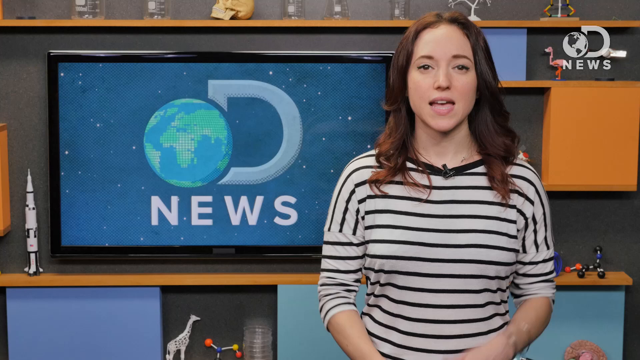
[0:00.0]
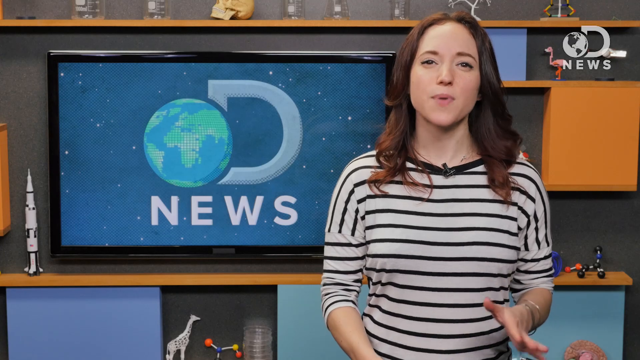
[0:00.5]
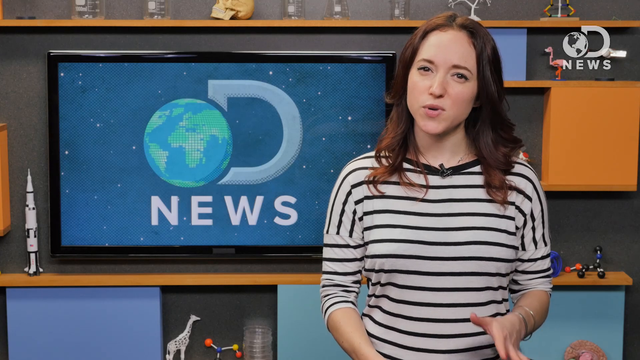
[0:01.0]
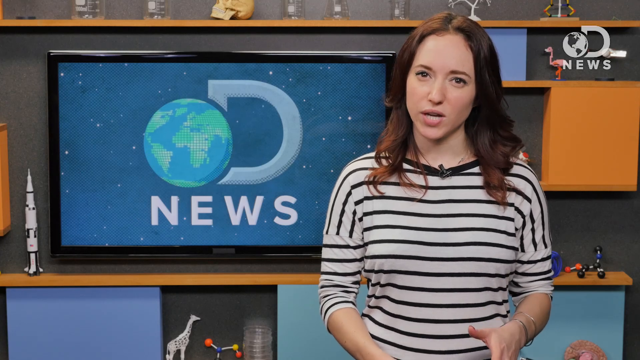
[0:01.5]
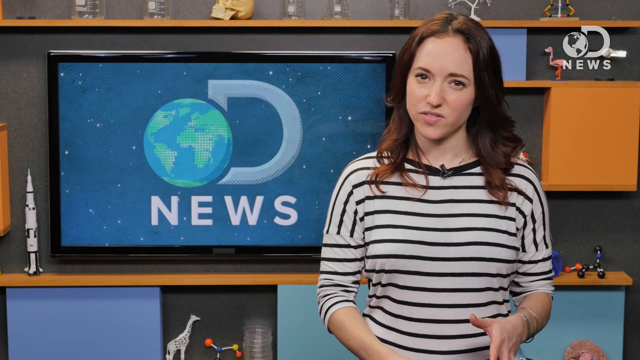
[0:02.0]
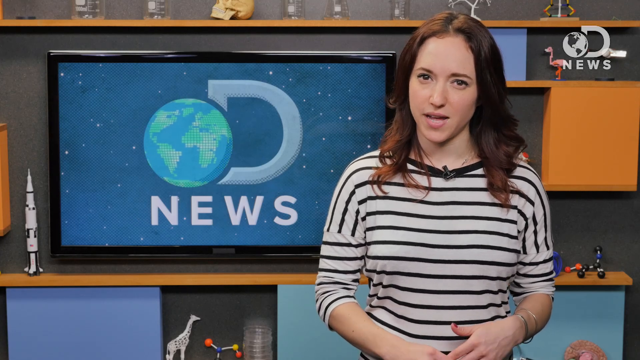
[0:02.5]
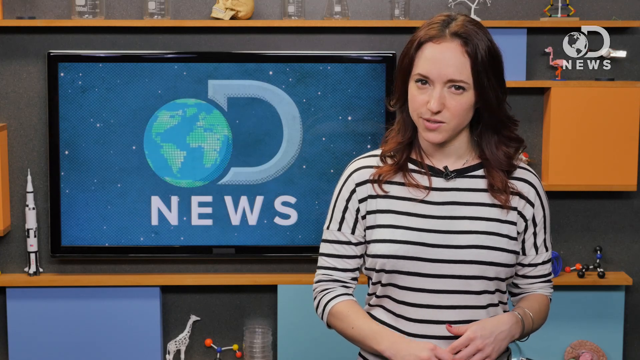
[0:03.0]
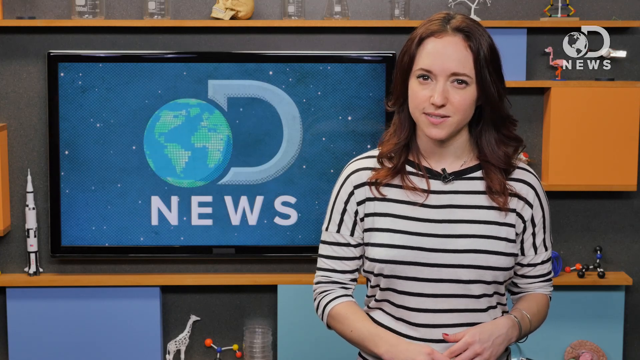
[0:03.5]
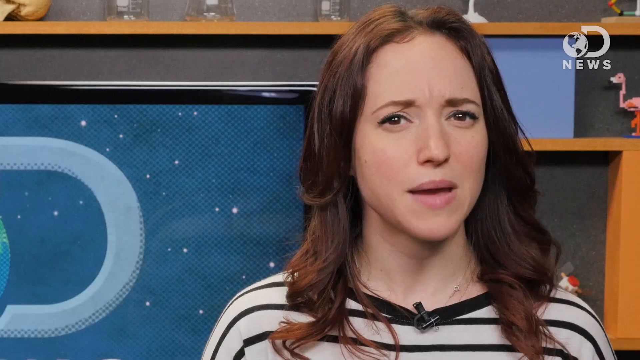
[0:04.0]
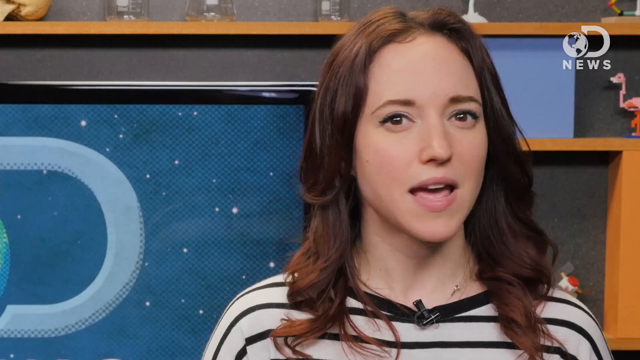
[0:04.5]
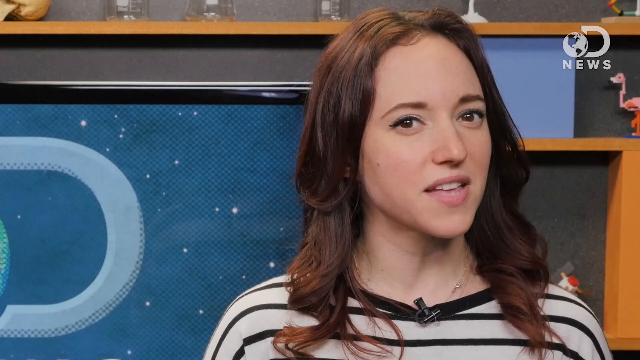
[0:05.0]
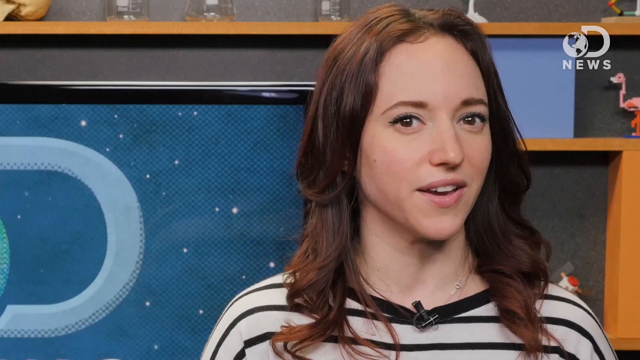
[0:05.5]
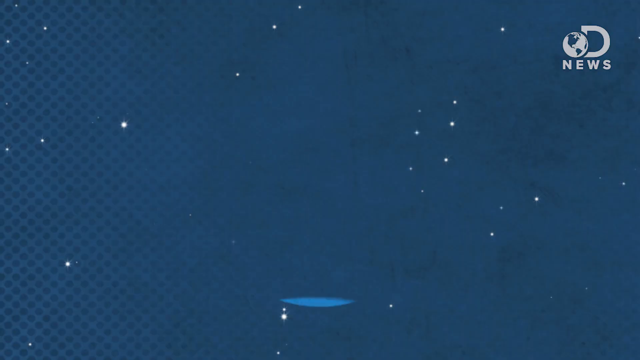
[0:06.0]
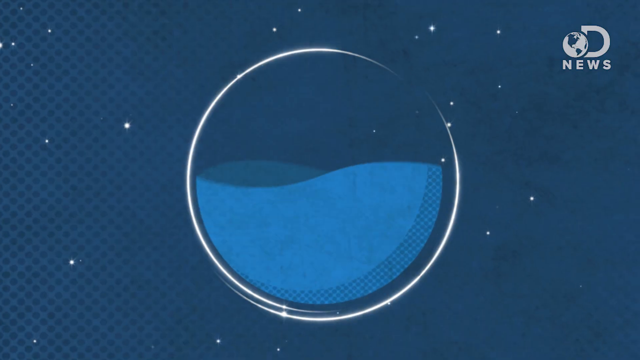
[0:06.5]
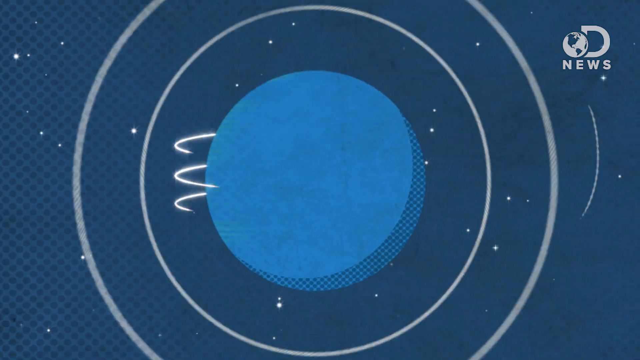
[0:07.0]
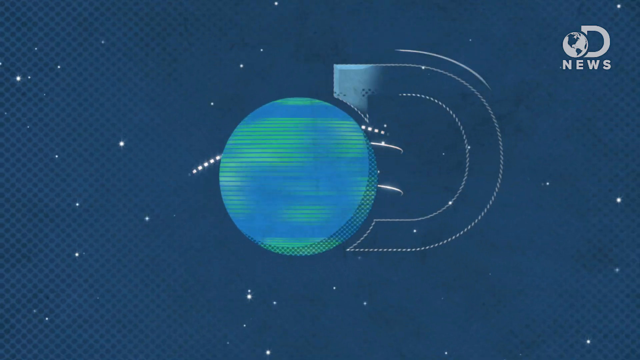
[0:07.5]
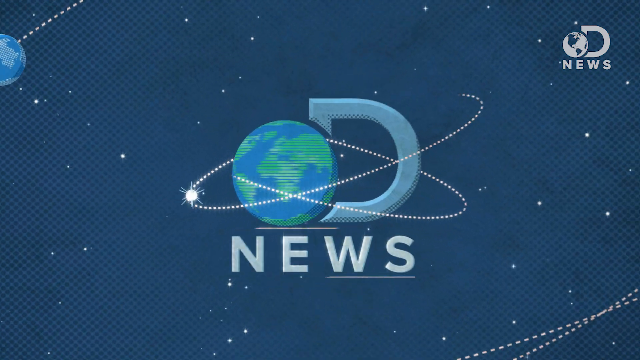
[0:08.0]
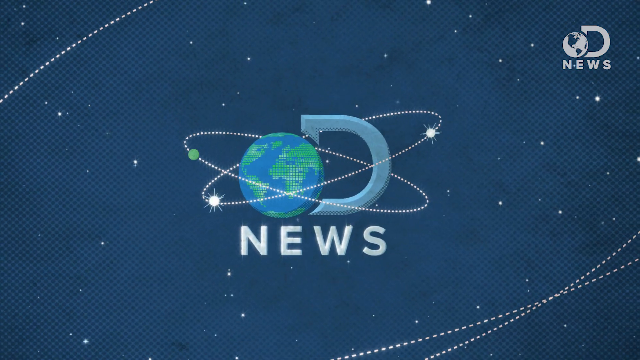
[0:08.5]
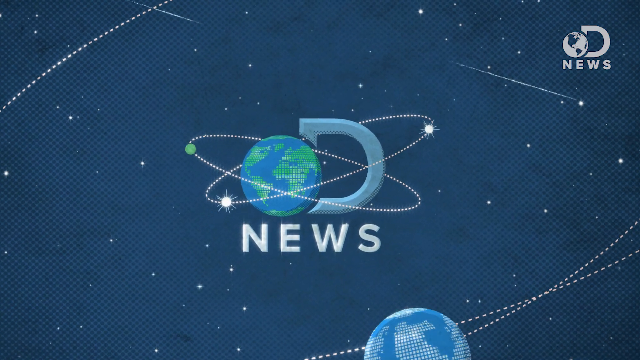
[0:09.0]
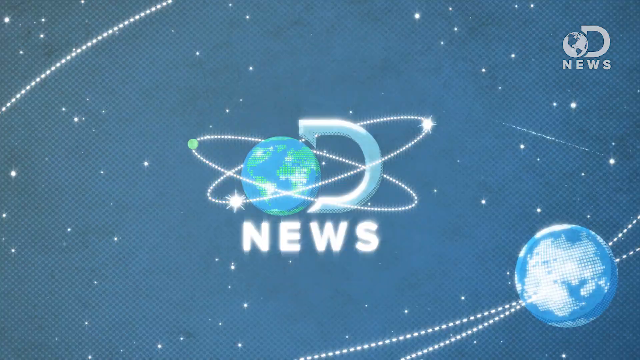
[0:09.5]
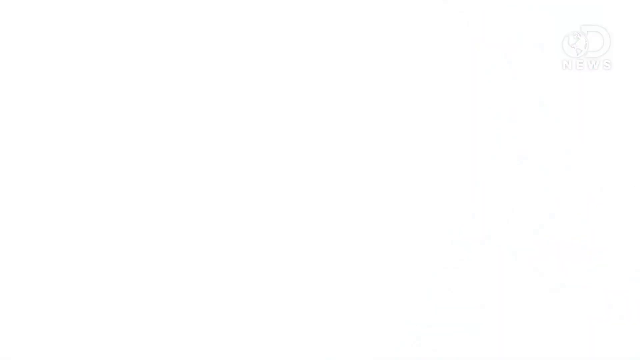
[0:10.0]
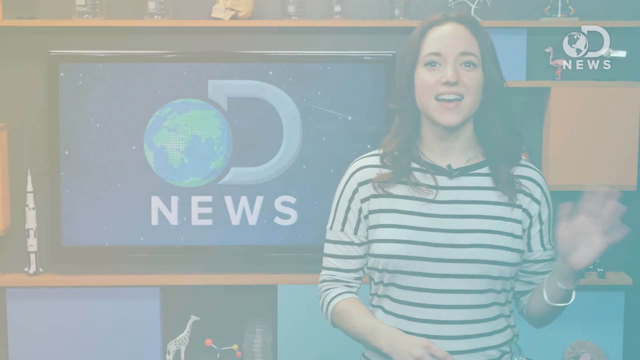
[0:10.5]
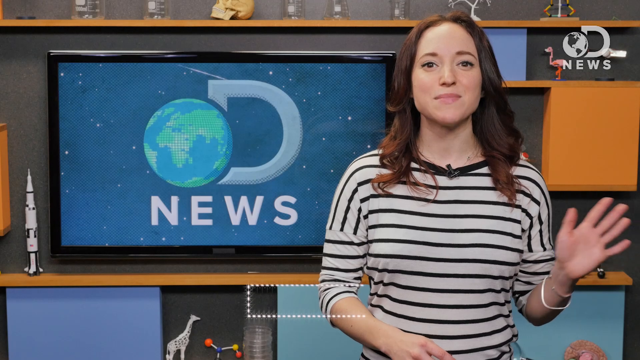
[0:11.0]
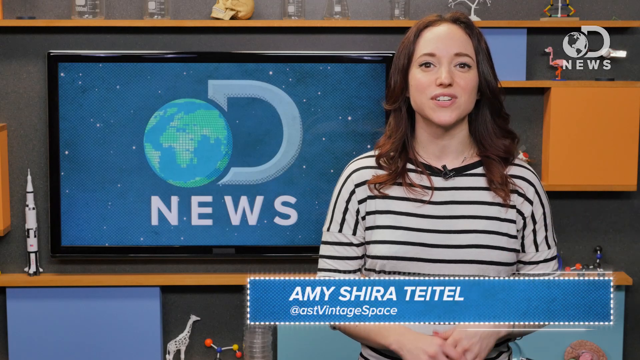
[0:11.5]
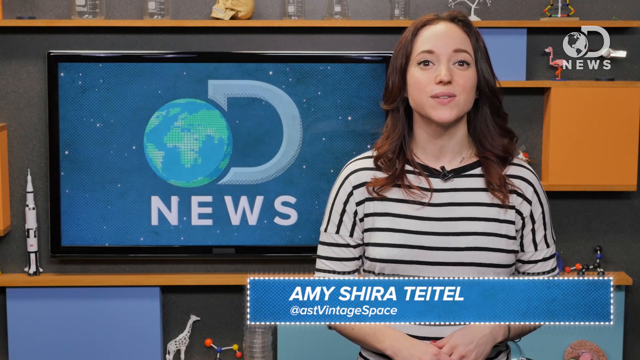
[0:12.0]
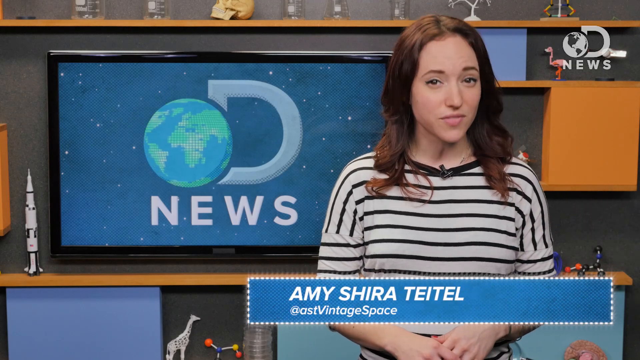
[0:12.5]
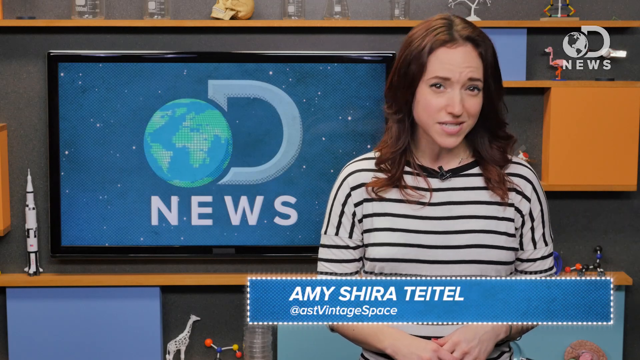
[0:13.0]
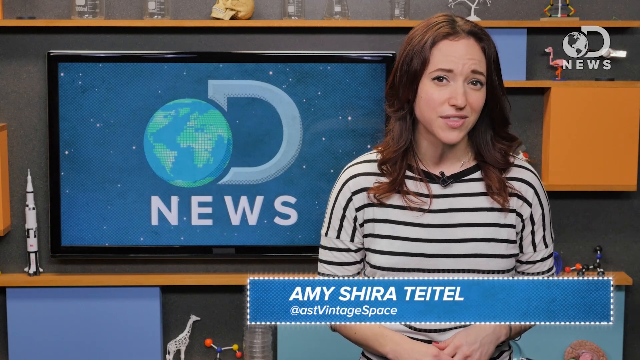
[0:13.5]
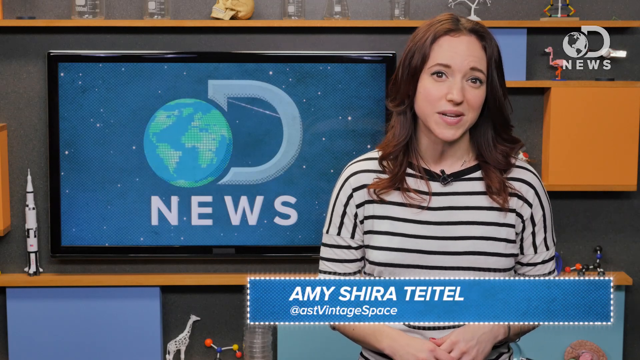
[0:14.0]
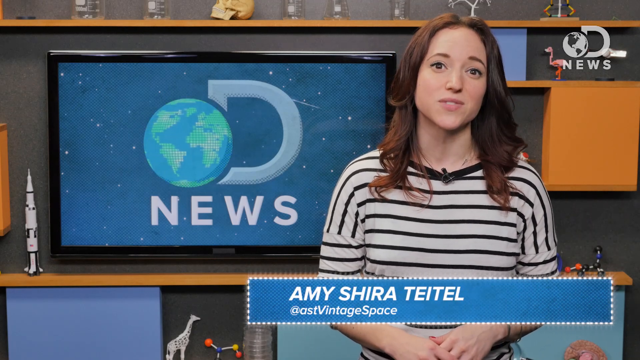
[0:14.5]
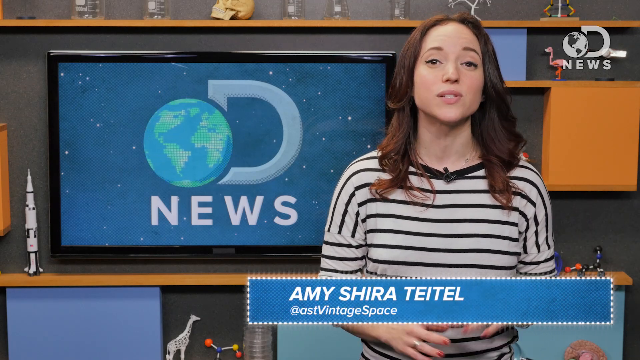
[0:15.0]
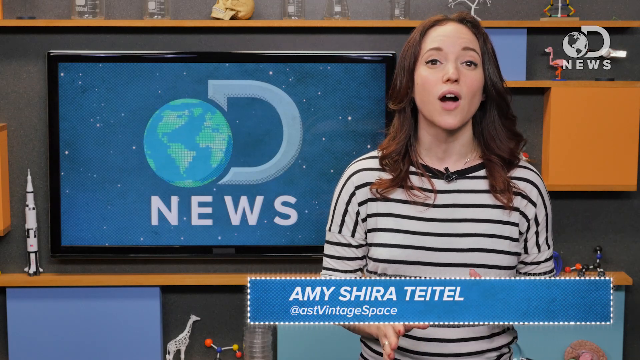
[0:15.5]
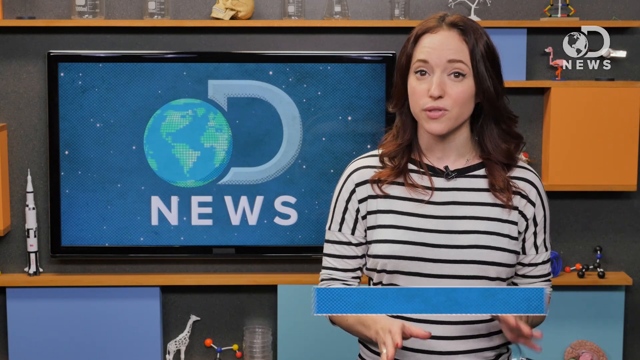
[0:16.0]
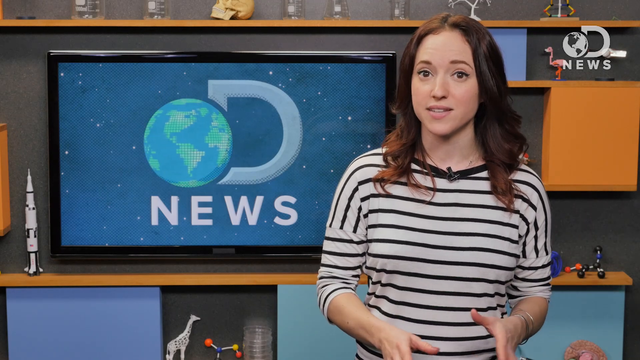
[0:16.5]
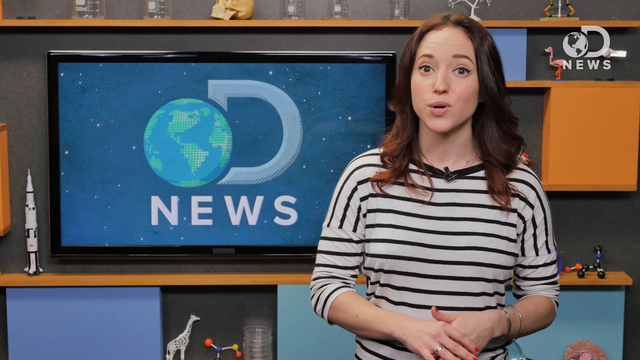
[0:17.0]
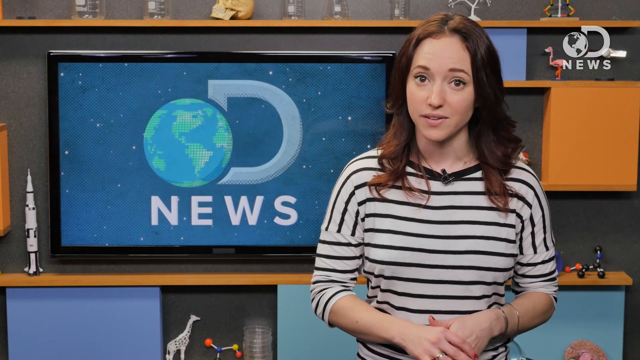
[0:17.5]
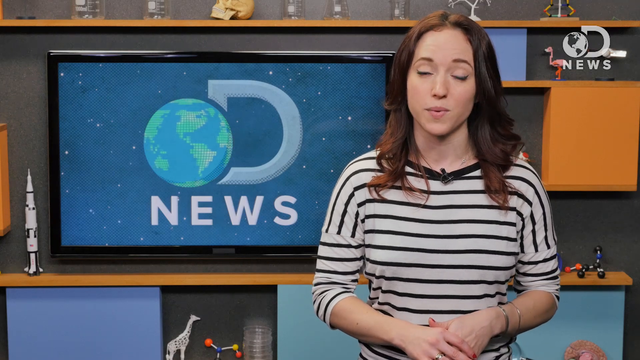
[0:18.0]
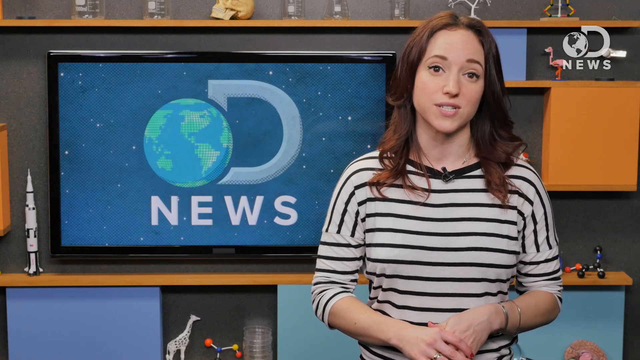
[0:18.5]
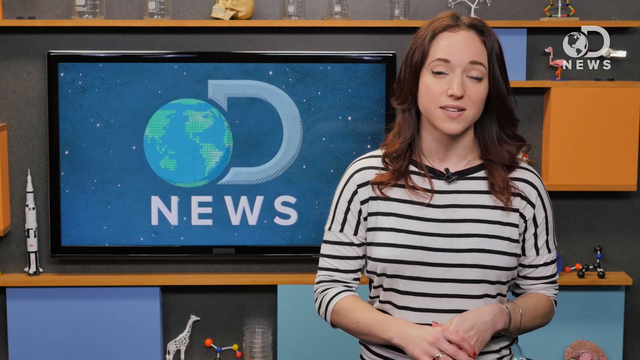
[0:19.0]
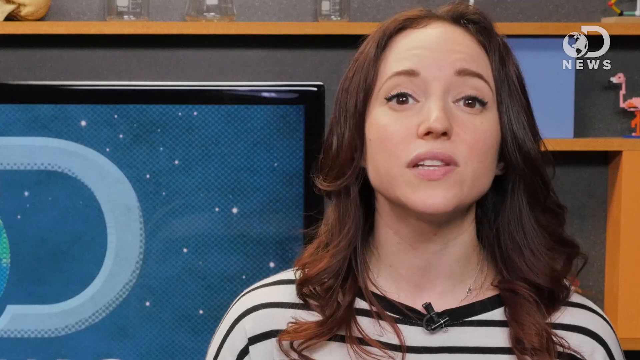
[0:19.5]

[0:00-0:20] A female news presenter, Amy Shira Teitel, stands in a news studio. She wears a black and white blouse with a microphone attached at the neck and has long brown hair. Behind her, the studio set has a television screen that says "D News," the symbol of the station she reports from, with a capital D and a globe spinning around next to it. There are also shelves with items on them, including a model of a rocket and what looks like a little flamingo. As she speaks, the view switches from her to the station's logo, which appears for just a few seconds before the view switches back to her.